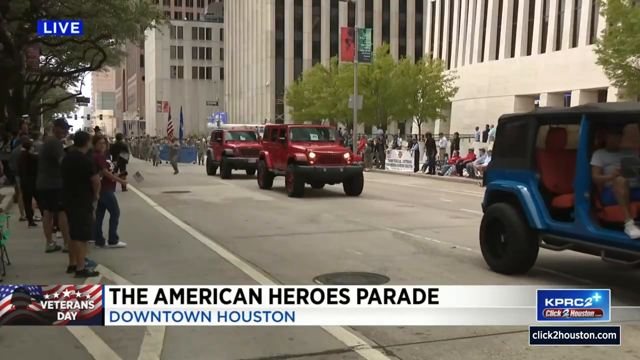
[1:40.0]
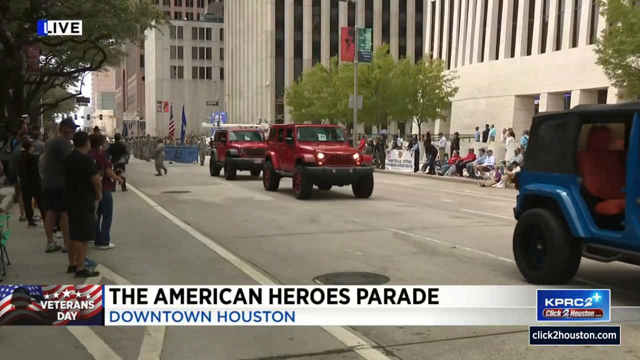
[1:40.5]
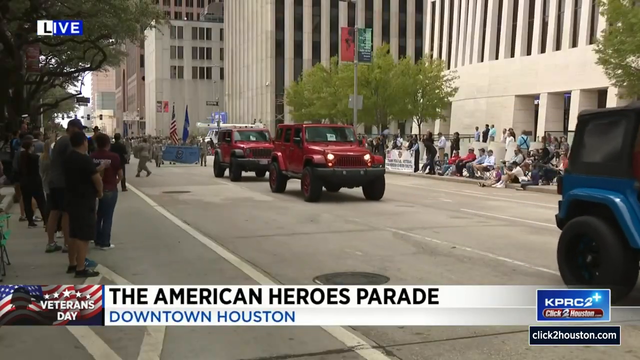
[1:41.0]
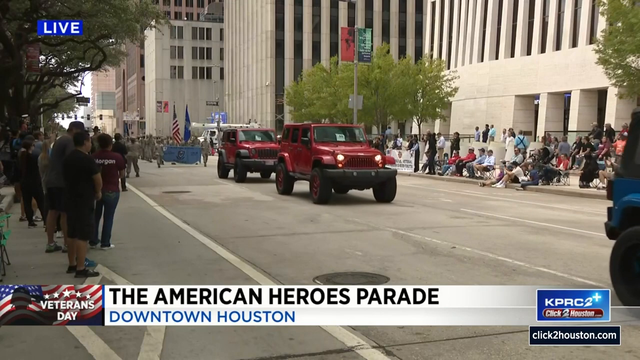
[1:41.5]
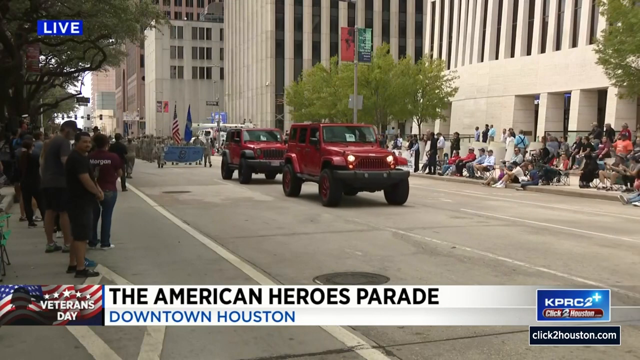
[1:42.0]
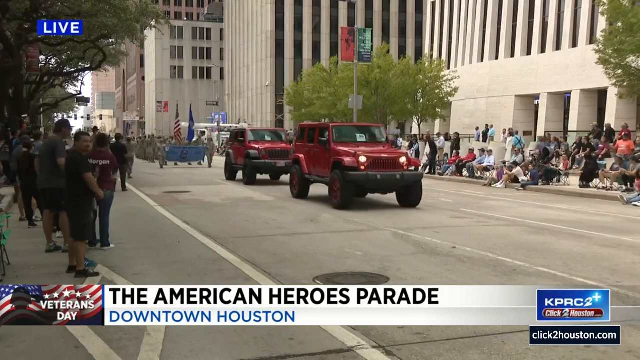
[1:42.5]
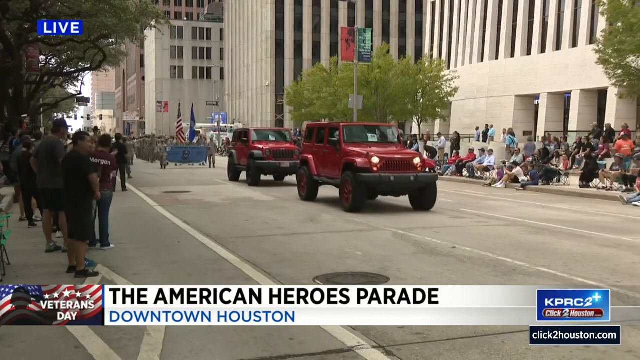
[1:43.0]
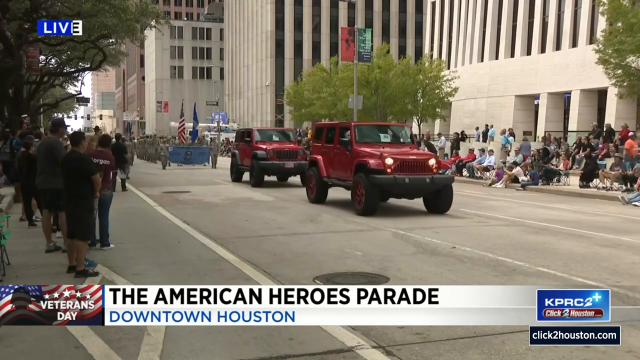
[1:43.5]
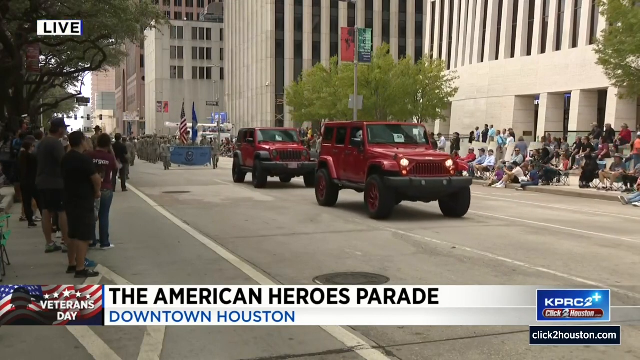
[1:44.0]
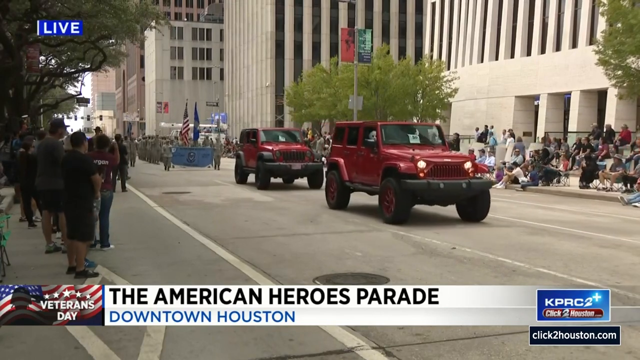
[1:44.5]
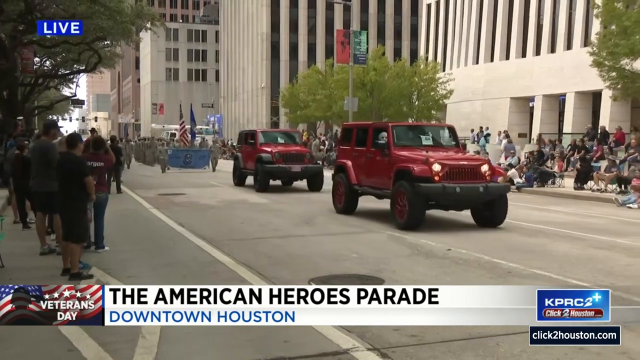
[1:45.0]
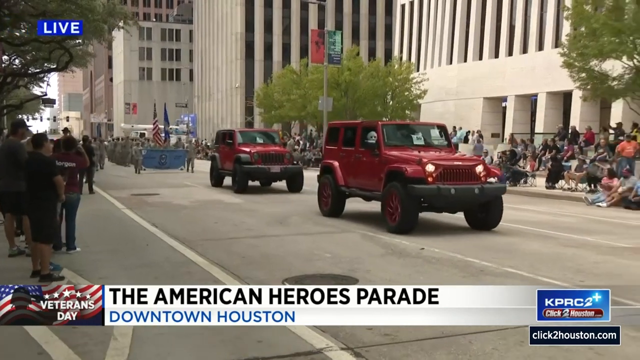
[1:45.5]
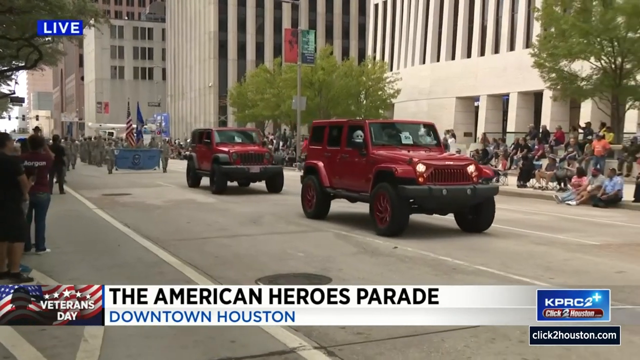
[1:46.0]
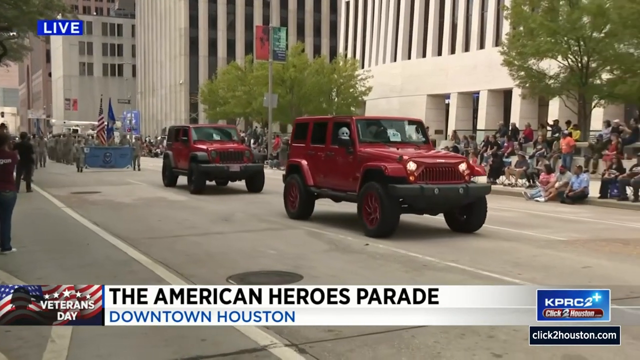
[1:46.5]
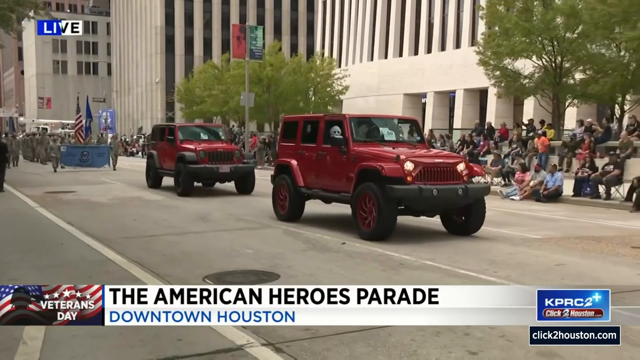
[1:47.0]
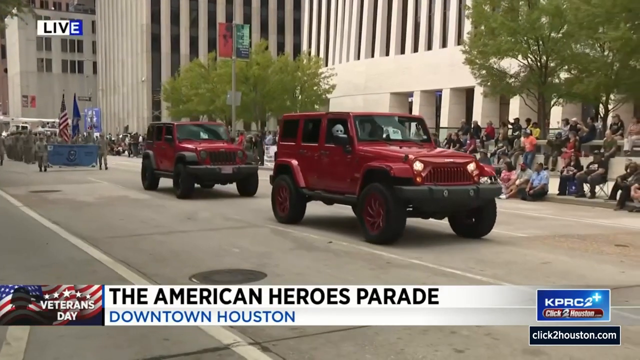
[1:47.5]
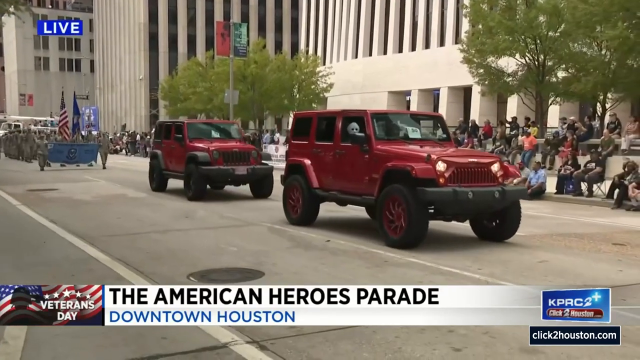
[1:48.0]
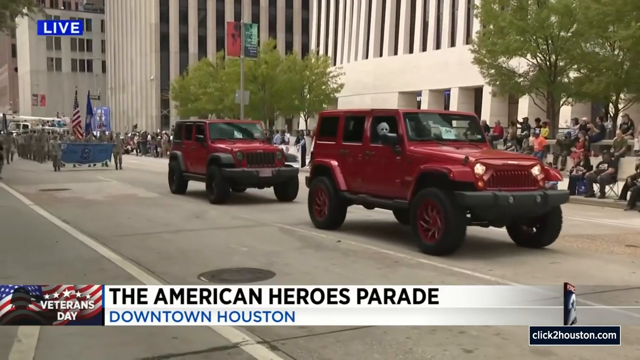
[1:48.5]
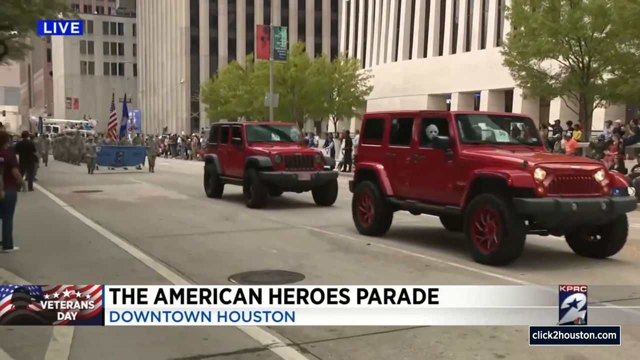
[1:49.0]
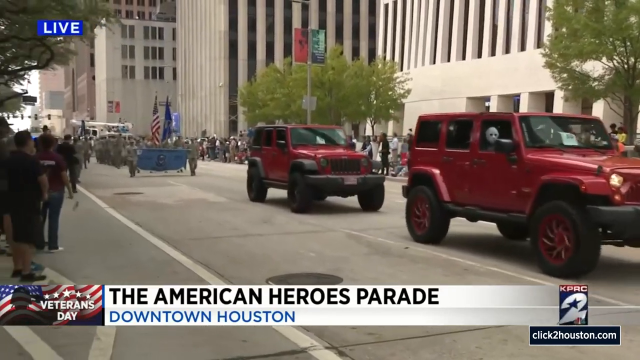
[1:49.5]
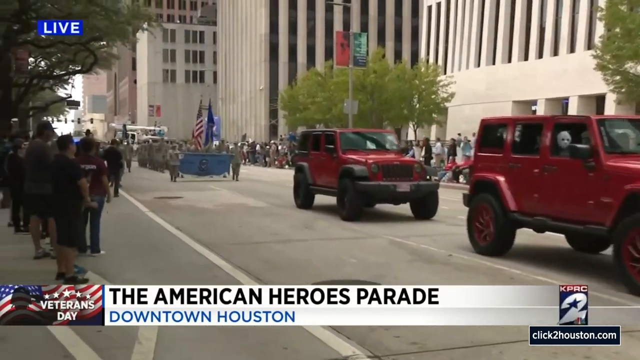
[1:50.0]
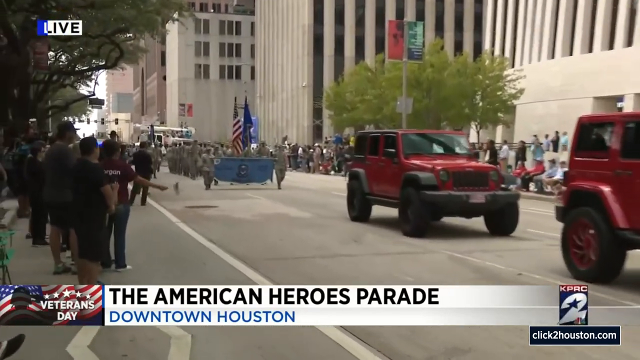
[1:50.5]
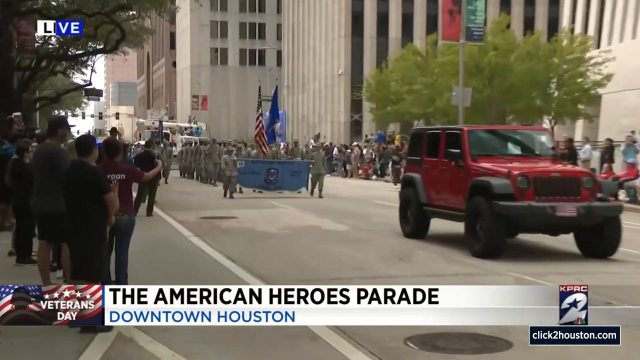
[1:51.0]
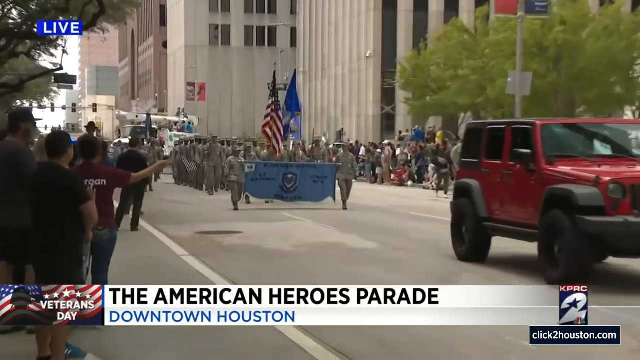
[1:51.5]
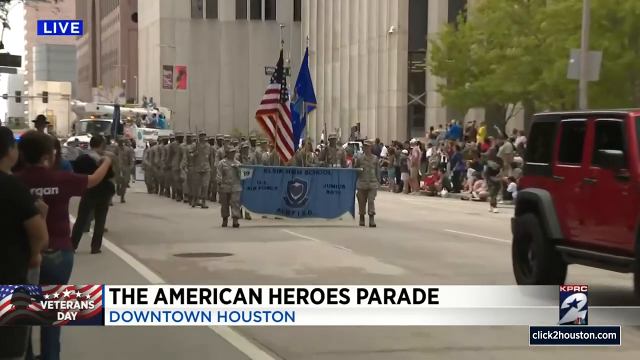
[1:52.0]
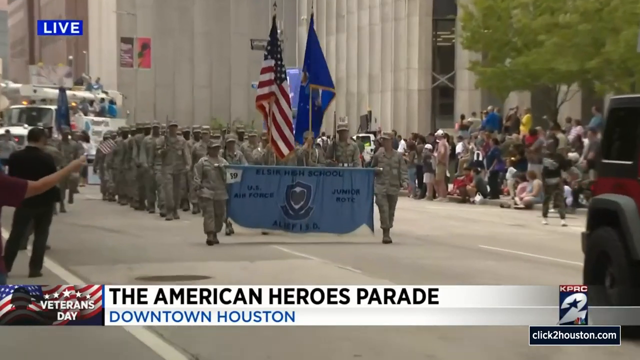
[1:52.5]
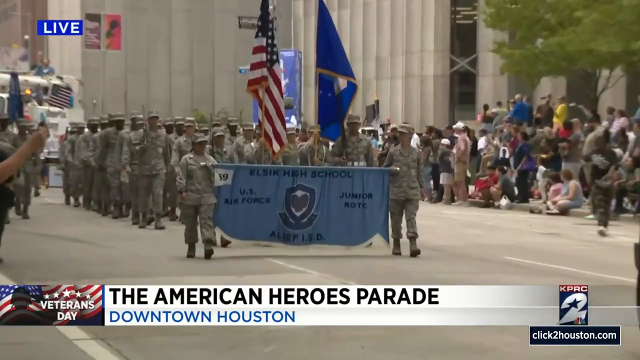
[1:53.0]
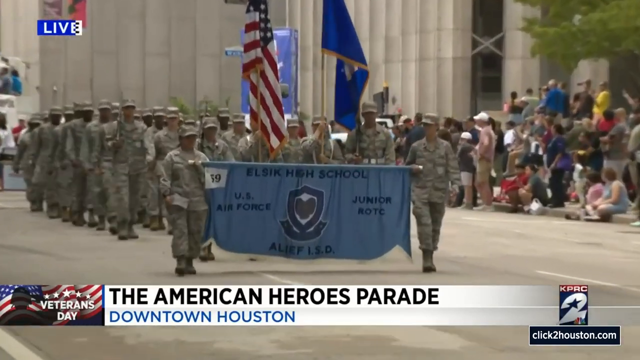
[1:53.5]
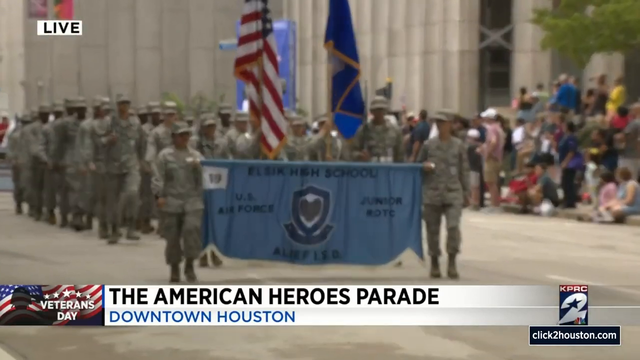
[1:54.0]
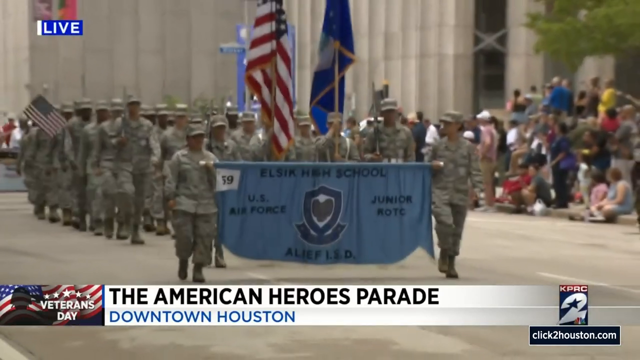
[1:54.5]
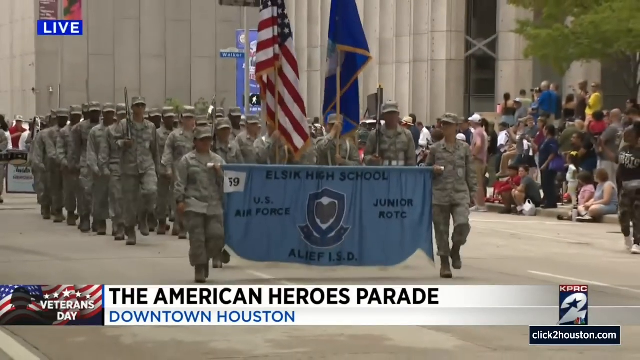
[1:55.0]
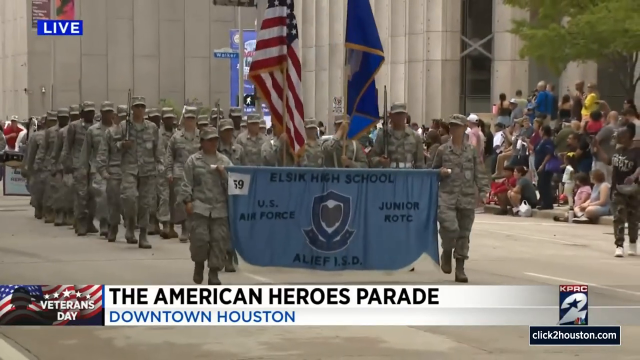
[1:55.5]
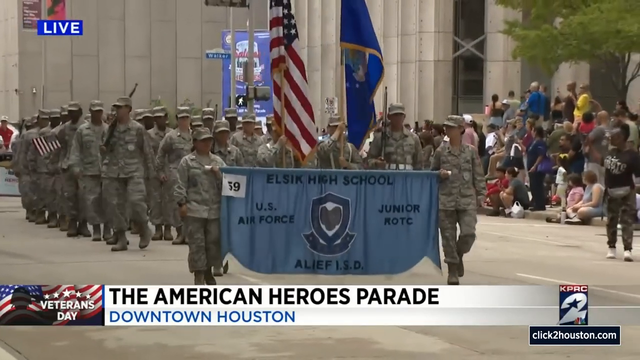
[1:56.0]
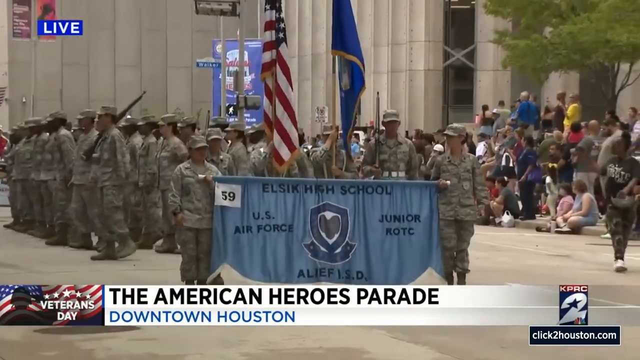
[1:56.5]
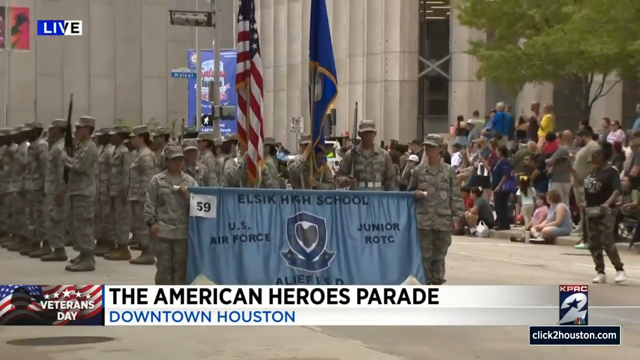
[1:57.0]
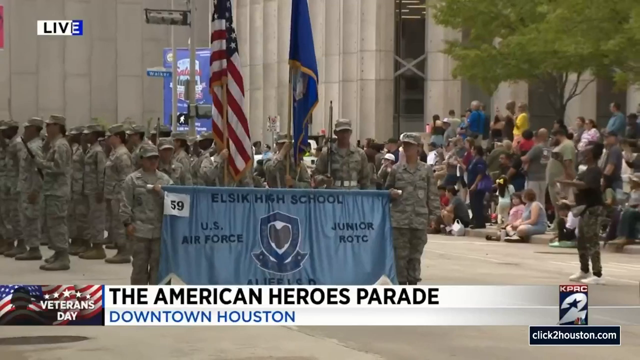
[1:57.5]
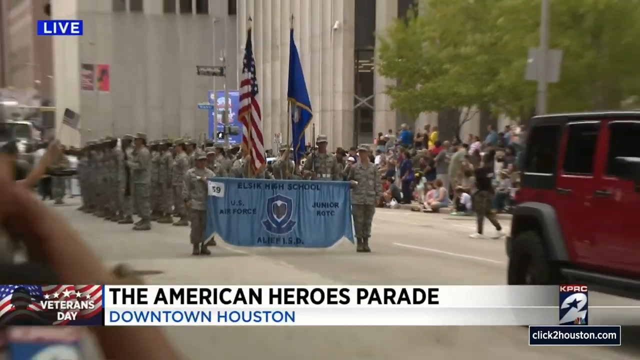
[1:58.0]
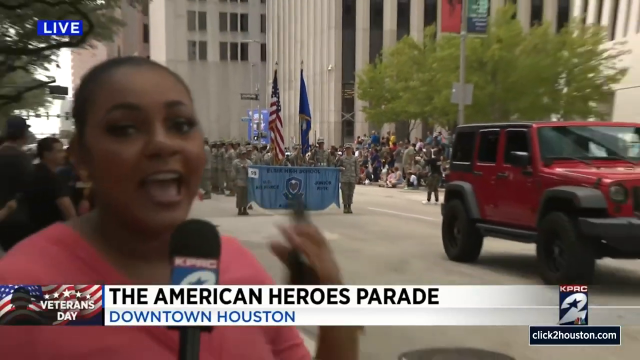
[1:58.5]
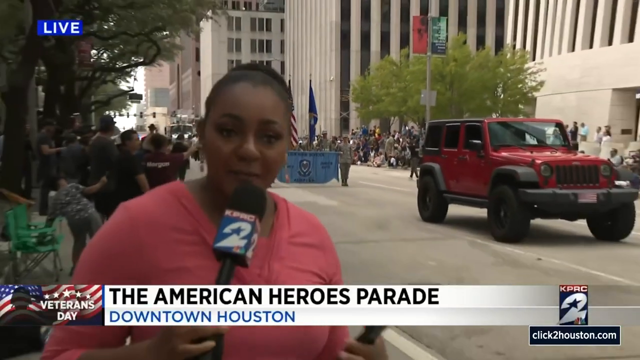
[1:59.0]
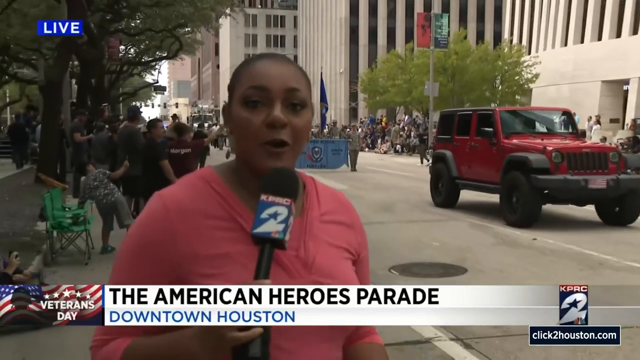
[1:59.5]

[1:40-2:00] The video returns to a street view of the parade from the side; the newscaster is no longer in the shot. At the front are two red jeeps and a group of people, with two people holding a banner in front of them; they appear to be in army fatigues. The camera zooms in on the individual marchers, who hold an American flag and a state flag, and follows them as they go by. Zoomed in, their banner reads "Elsick High School, U.S. Air Force Junior, ROTC." The four people holding the banner keep marching while most of the group stops and turns to the side as though about to do a presentation. The camera zooms out to show the newscaster standing off to the side; she steps back into frame and speaks, gesturing with her hands and pointing in the group's general direction as the camera zooms back in on them. The group moves slowly forward to keep up with the rest of the parade, which has already moved out of frame. At the very front are the four holding the banner, including two holding an American flag and a Texas state flag.